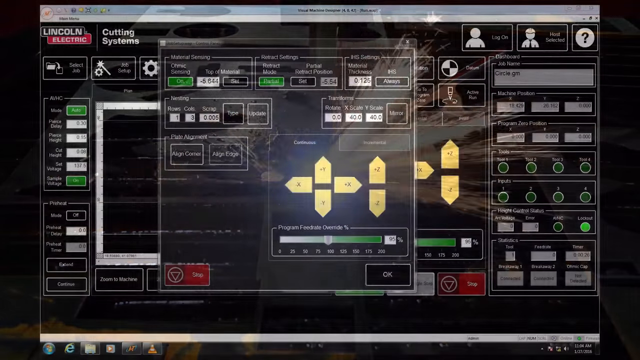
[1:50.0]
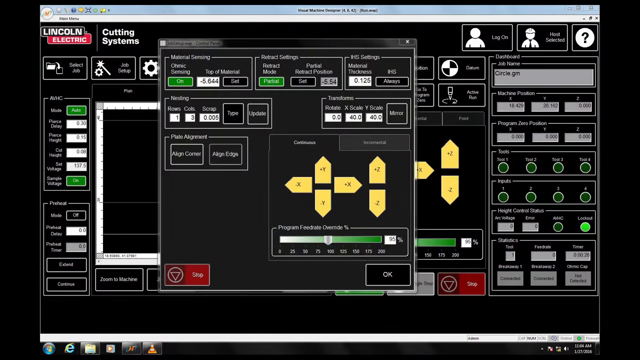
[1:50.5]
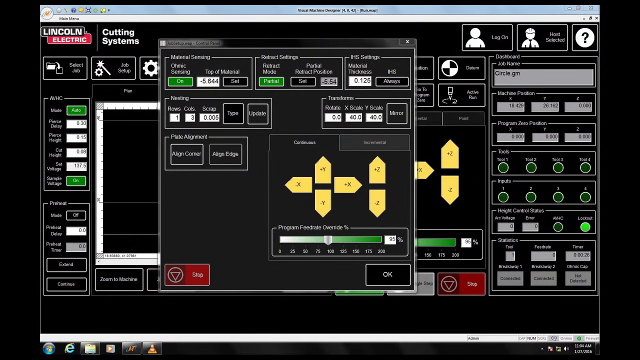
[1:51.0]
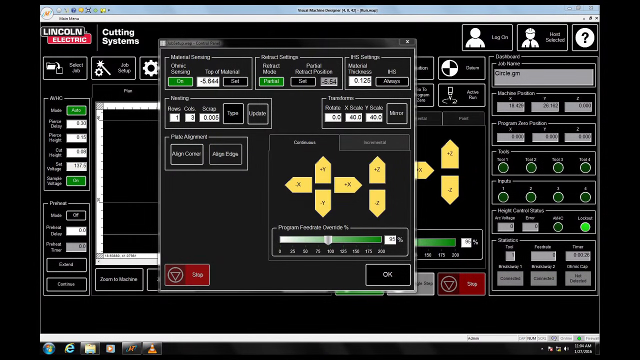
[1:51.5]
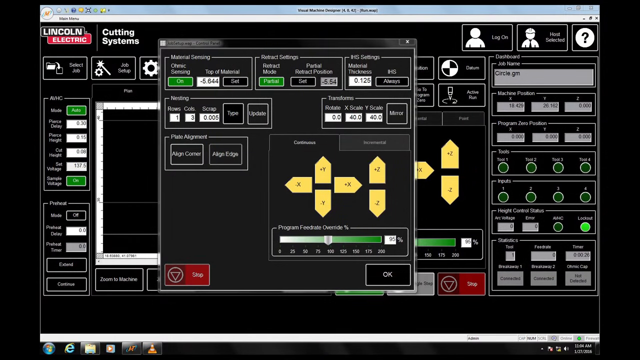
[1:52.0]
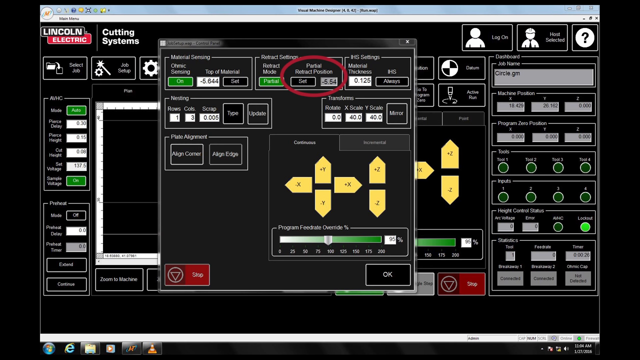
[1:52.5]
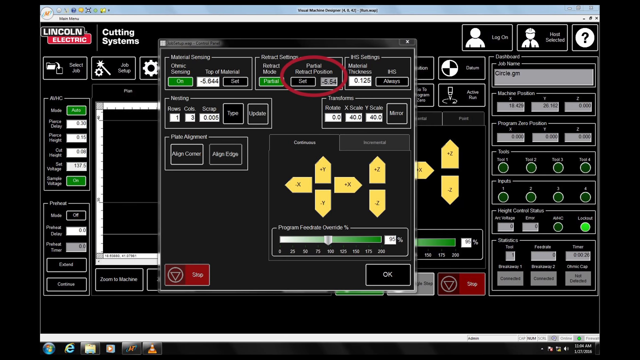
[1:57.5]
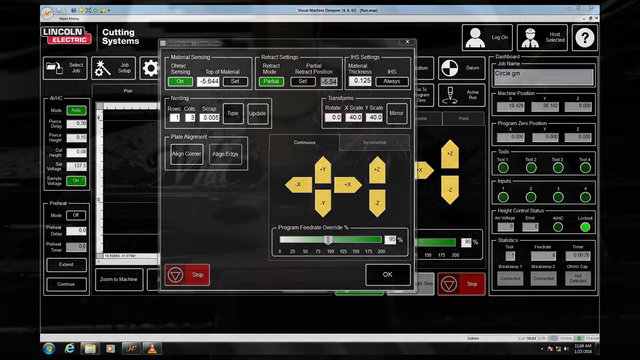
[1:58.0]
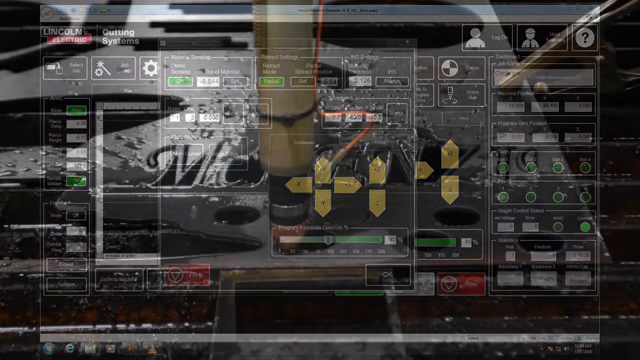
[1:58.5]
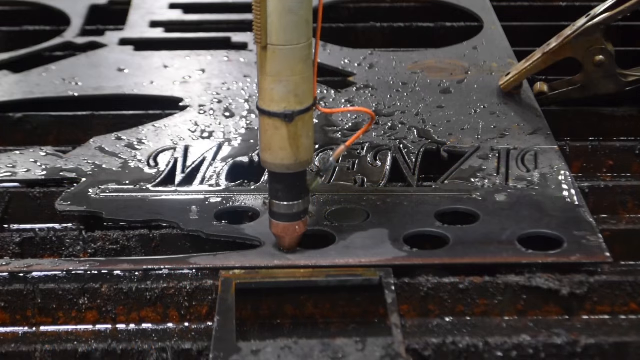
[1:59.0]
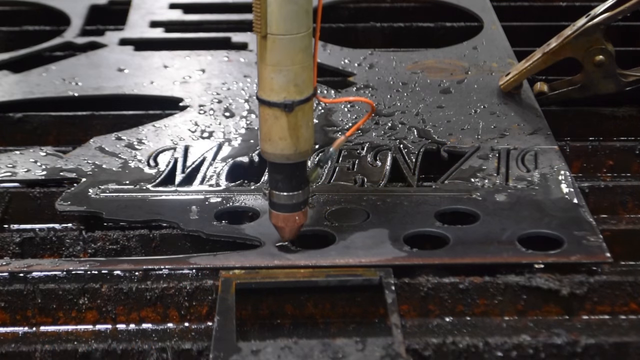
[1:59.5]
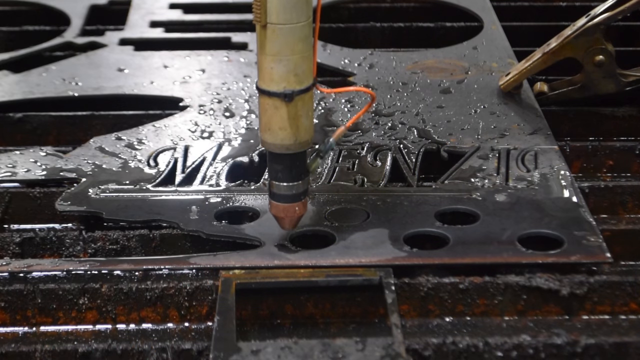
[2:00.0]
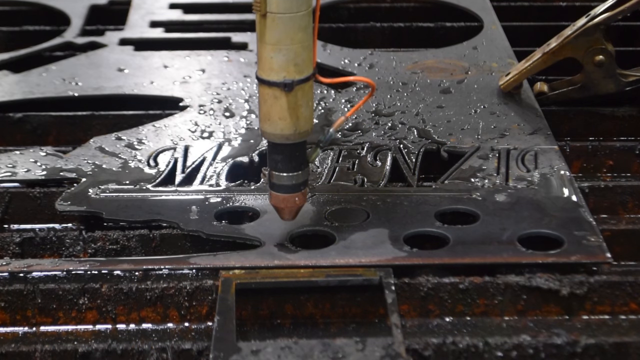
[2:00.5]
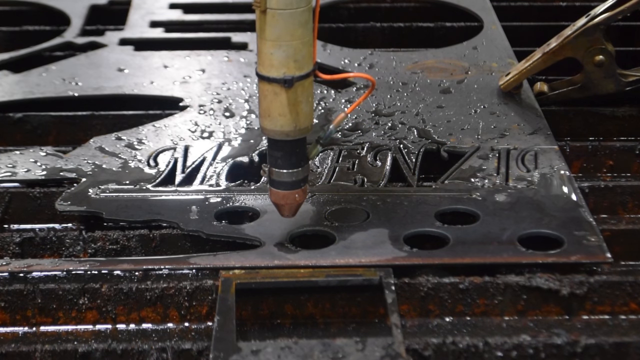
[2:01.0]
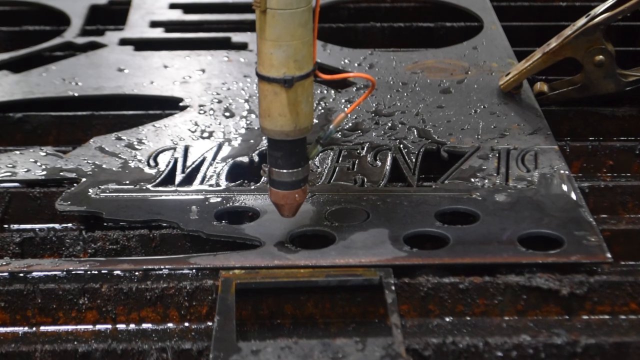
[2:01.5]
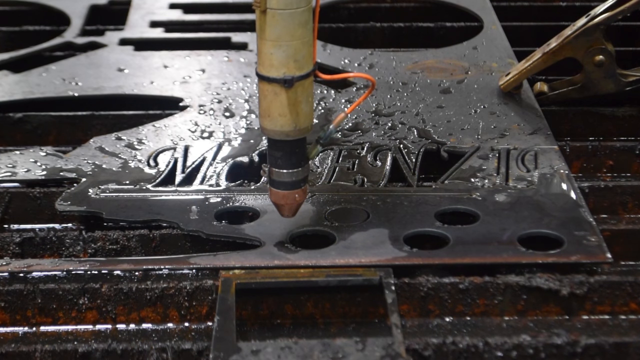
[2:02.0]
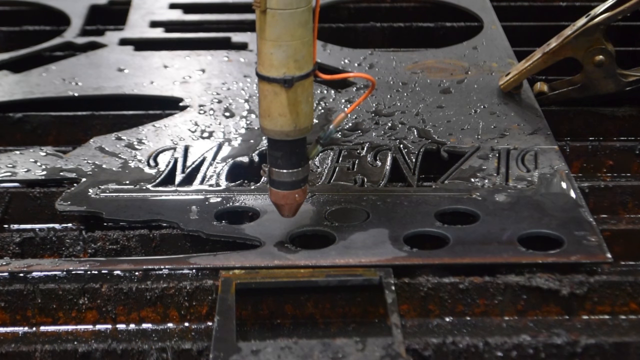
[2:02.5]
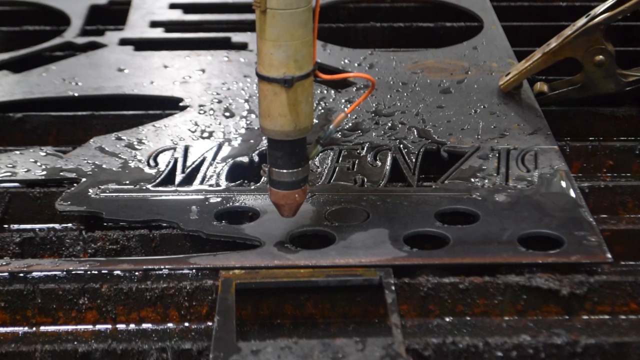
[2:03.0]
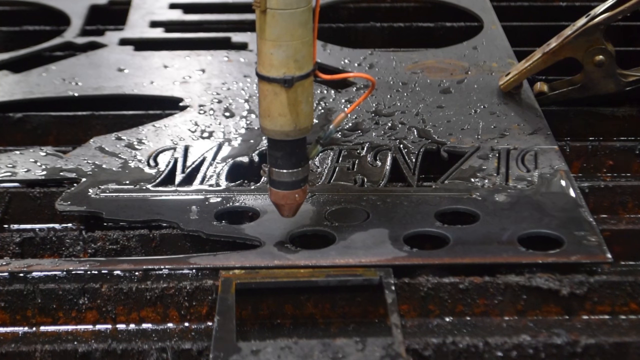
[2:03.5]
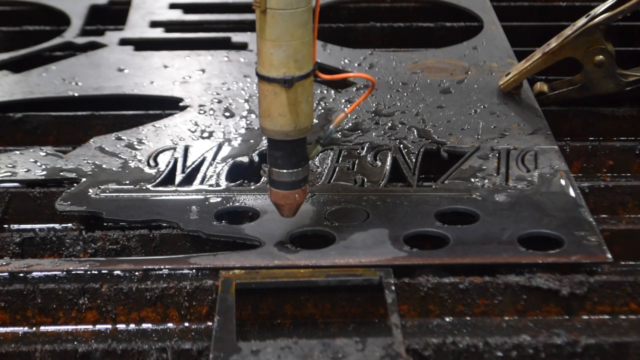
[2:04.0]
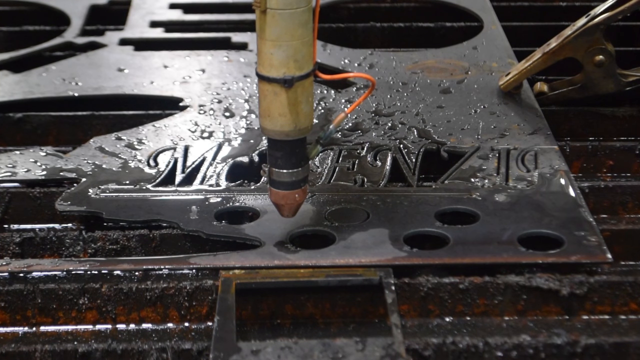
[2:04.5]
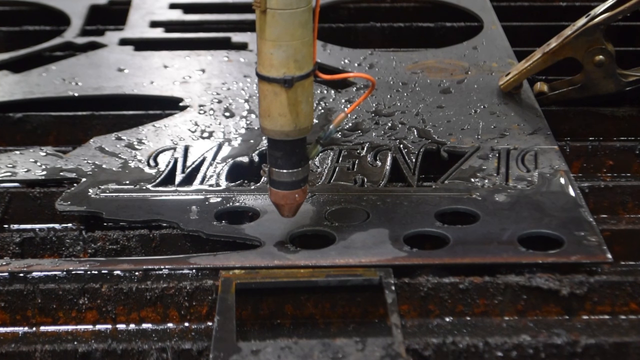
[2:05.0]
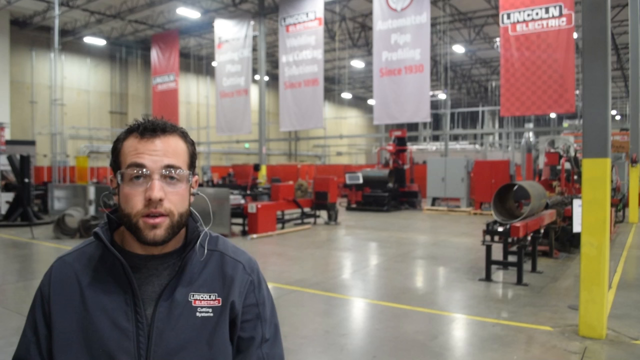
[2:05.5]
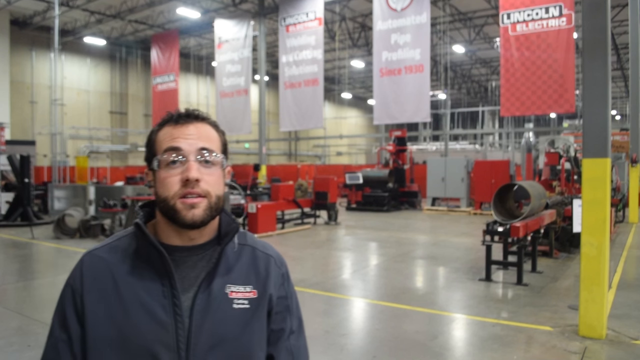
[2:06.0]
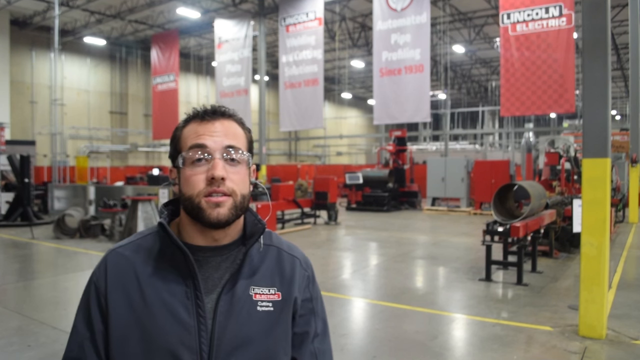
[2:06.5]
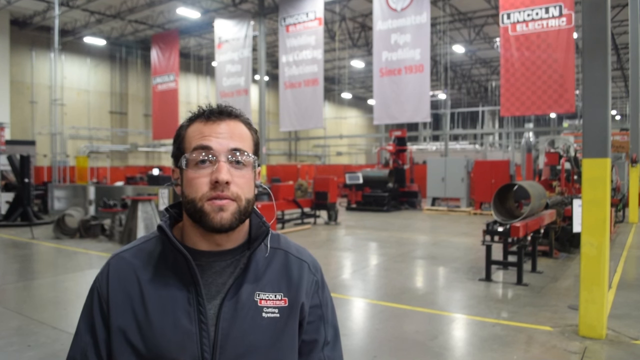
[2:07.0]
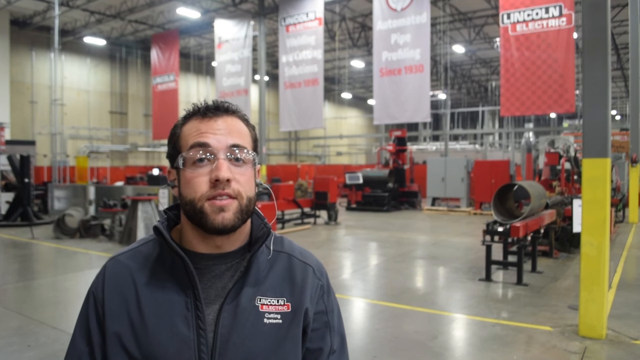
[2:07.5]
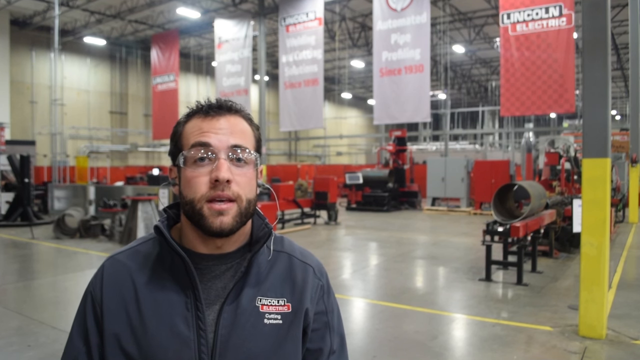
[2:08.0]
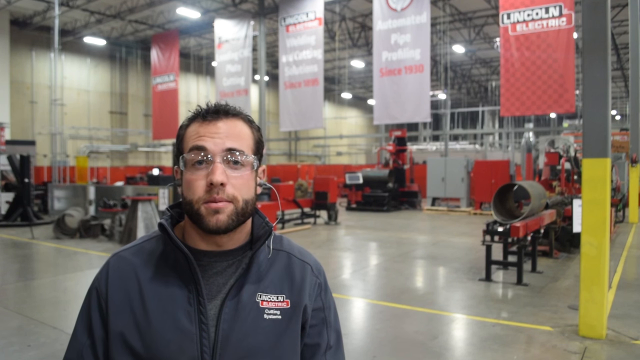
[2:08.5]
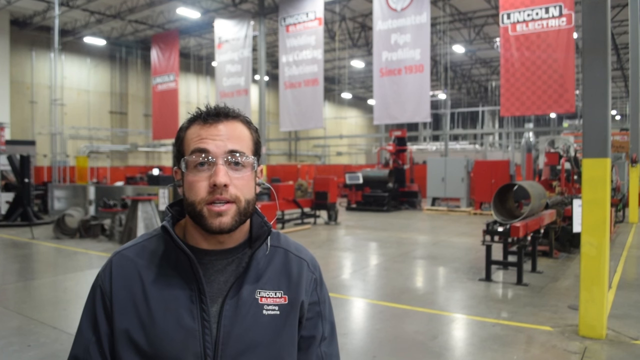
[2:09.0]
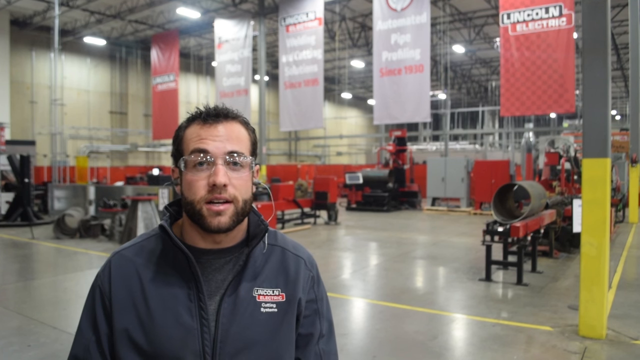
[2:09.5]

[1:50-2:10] The iron from above has drilled five holes in the flat iron bearing "McKenzie" (spelled M-C-K-E-N-Z-I), all under the name, and a sixth spot has not yet been bored. The cursor moves on "partial retract position". The page shows "Lincoln Electric" and "cutting systems". Four yellow arrows point east, west, north and south; the one pointing right has two other arrows, one pointing upward and one downward. On the right edge are two other yellow arrows. At the top right corner of the screen are two images that look like human beings and a question mark. The green circles are still green, and one looks as if it is lit.